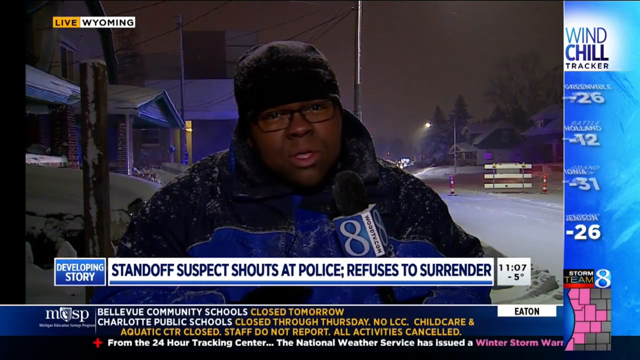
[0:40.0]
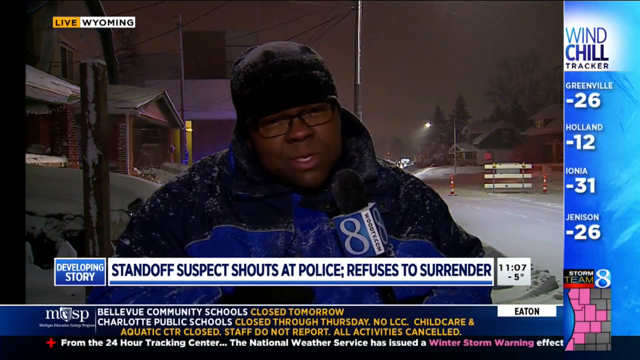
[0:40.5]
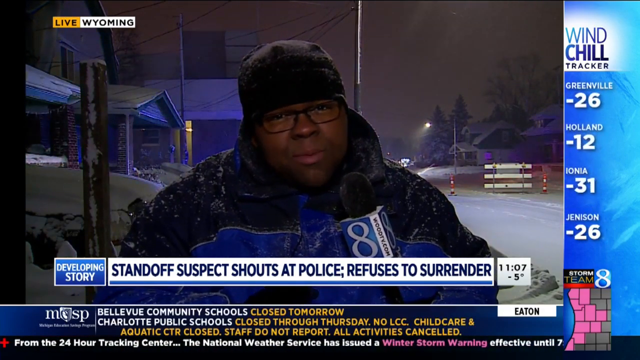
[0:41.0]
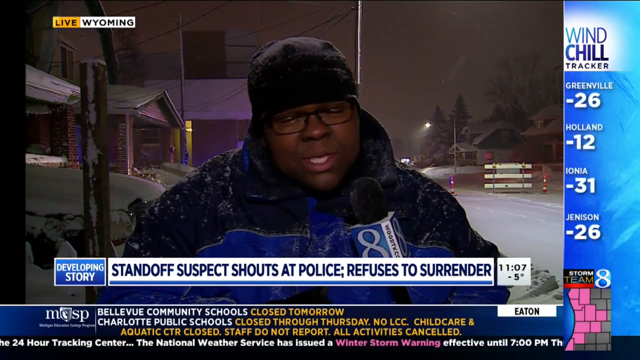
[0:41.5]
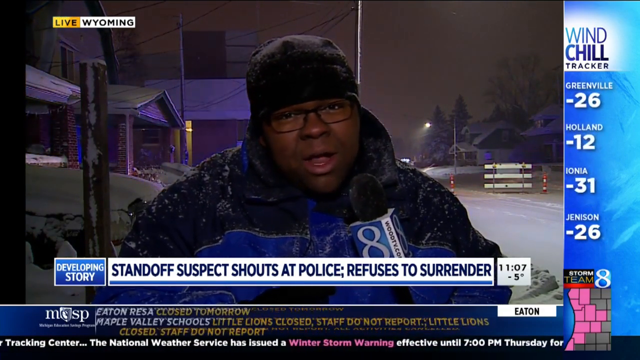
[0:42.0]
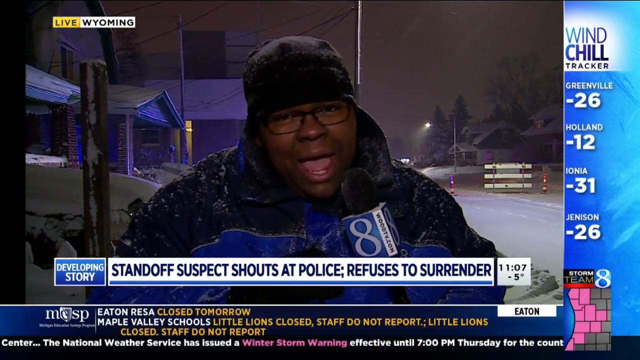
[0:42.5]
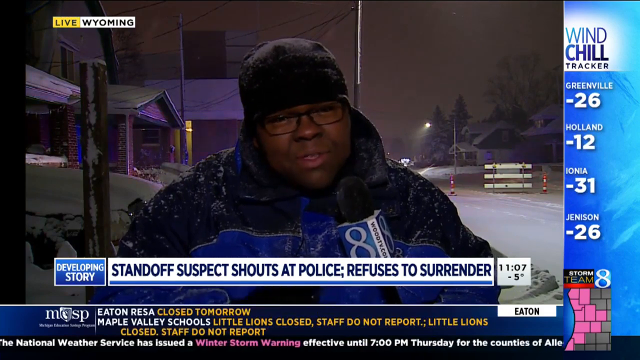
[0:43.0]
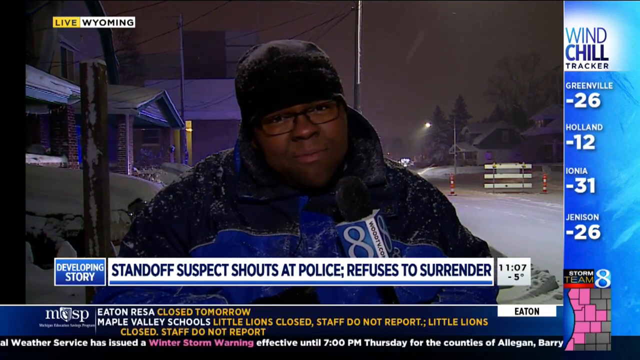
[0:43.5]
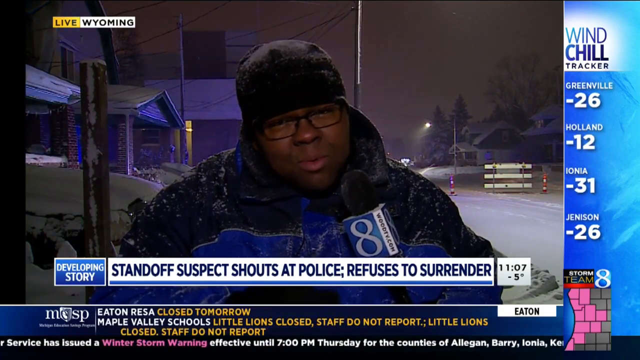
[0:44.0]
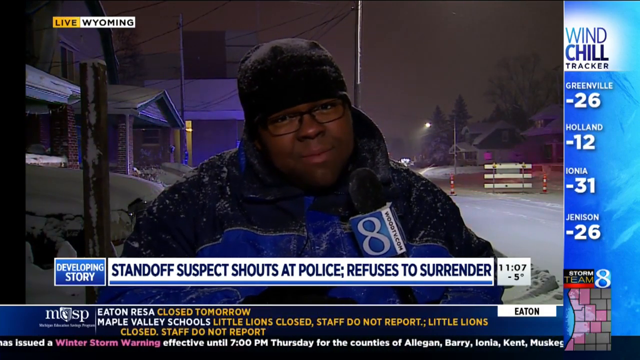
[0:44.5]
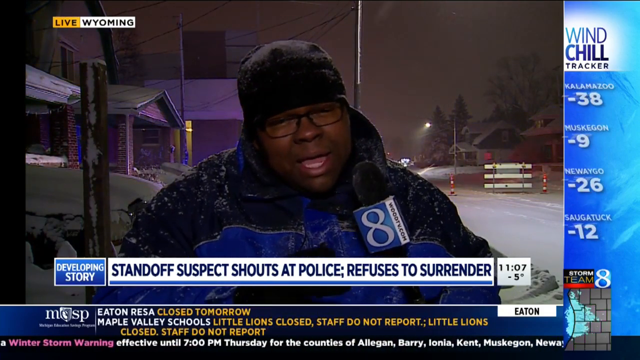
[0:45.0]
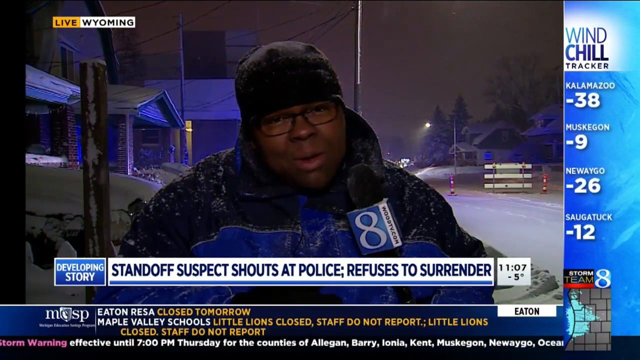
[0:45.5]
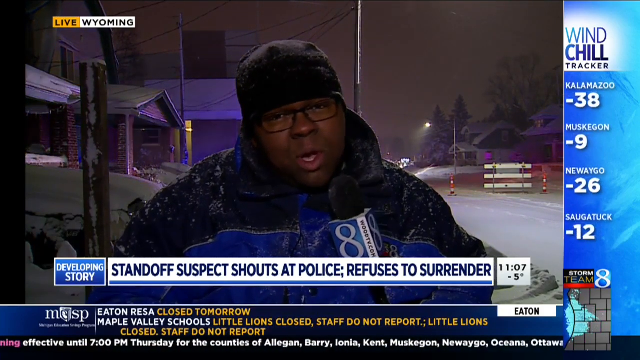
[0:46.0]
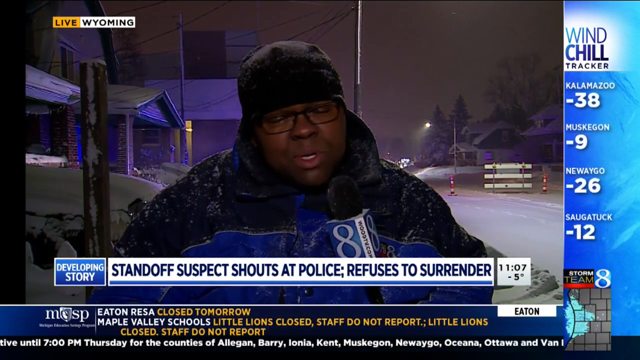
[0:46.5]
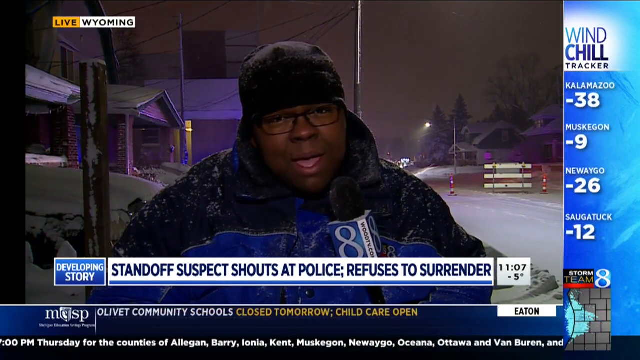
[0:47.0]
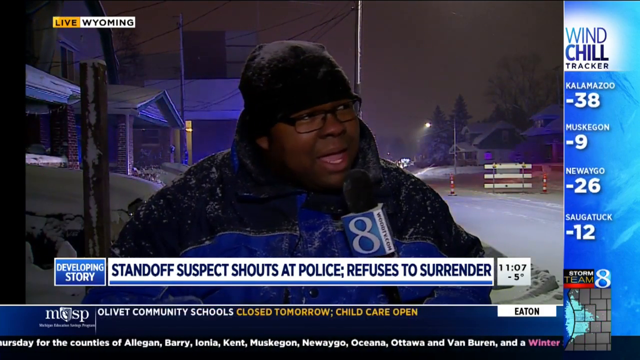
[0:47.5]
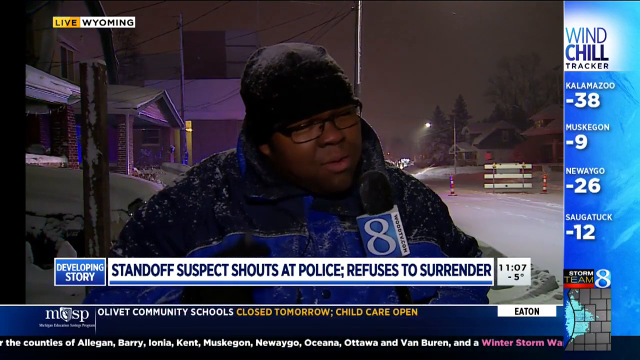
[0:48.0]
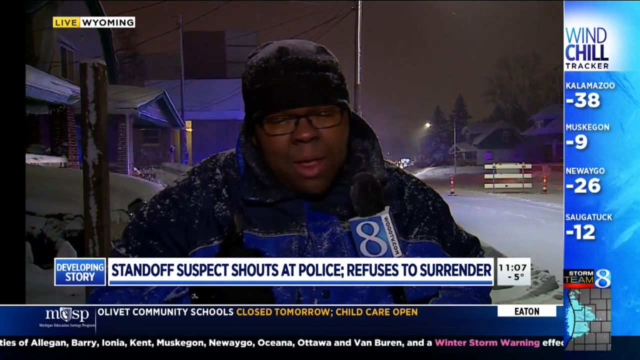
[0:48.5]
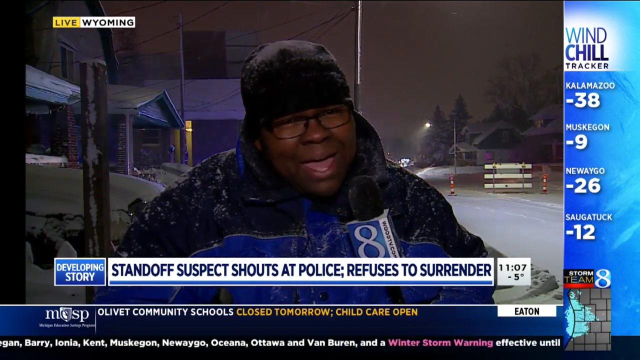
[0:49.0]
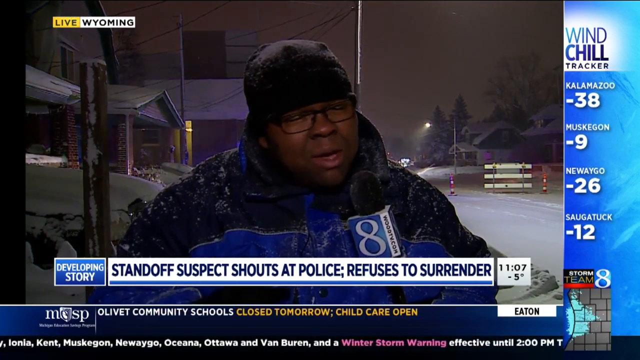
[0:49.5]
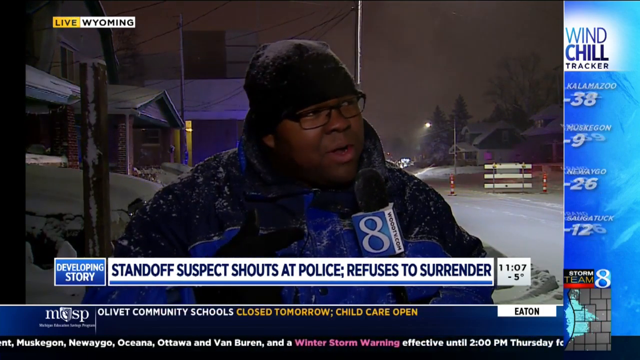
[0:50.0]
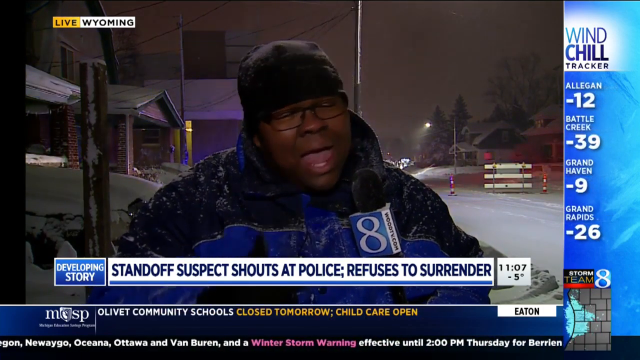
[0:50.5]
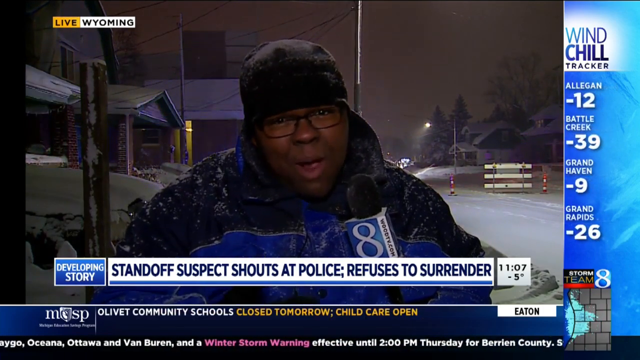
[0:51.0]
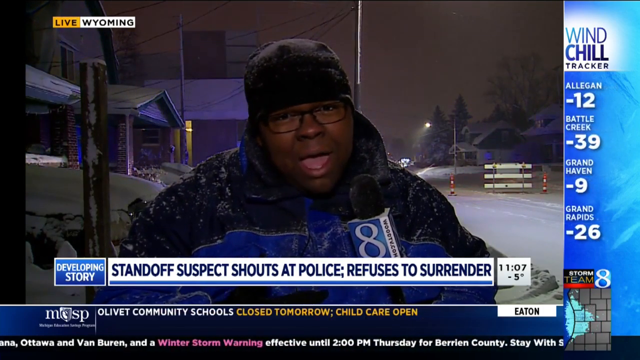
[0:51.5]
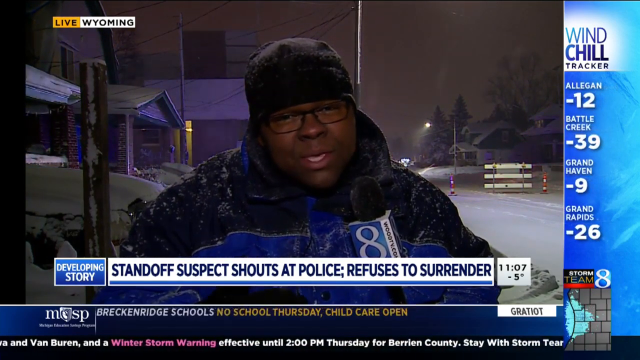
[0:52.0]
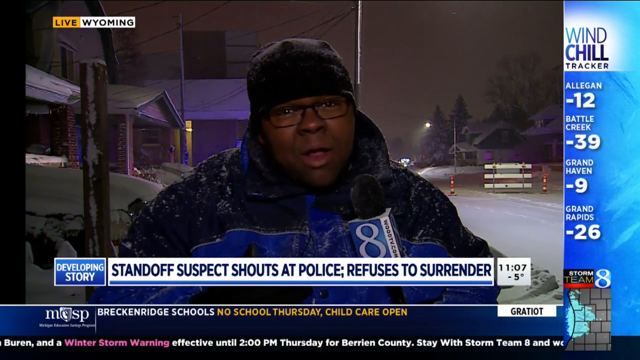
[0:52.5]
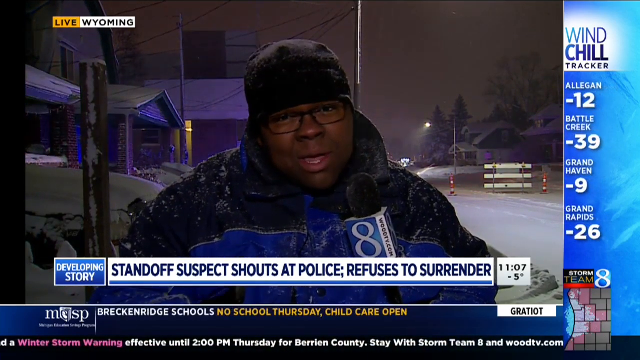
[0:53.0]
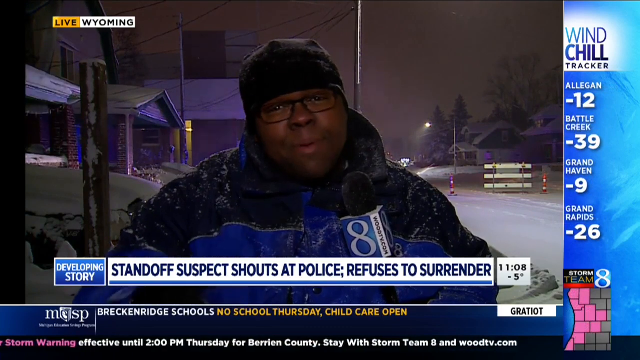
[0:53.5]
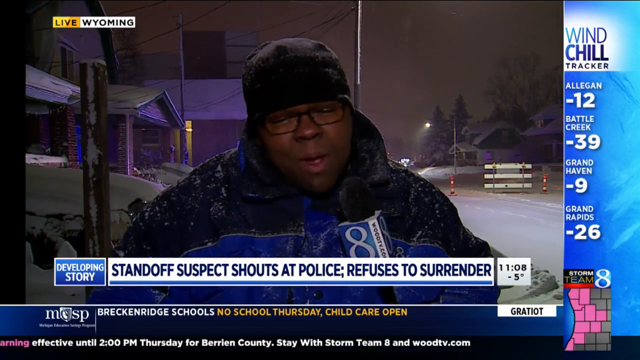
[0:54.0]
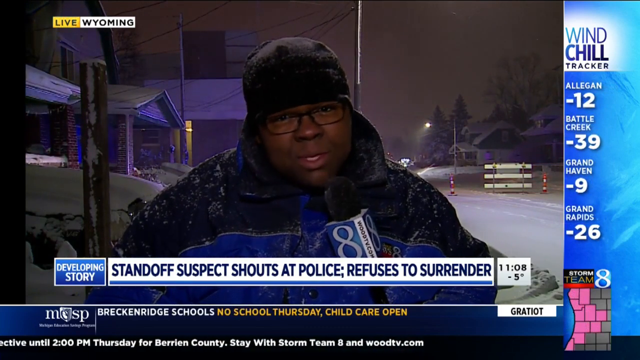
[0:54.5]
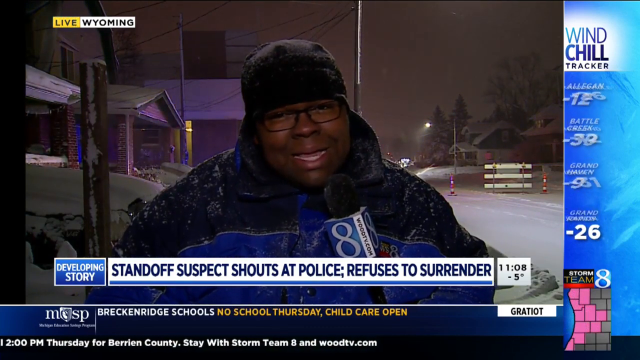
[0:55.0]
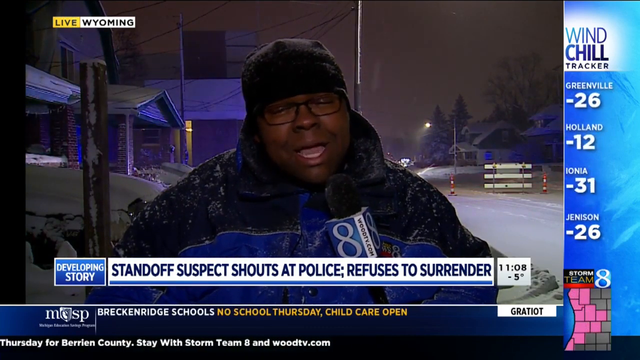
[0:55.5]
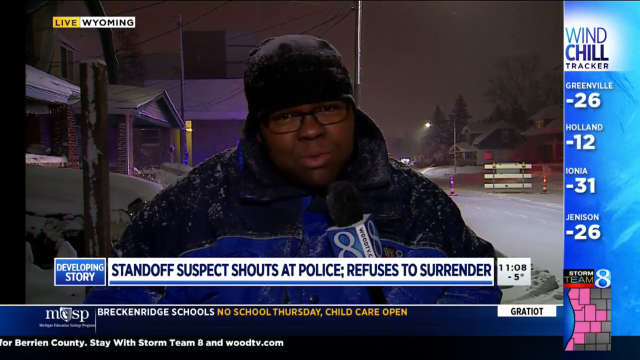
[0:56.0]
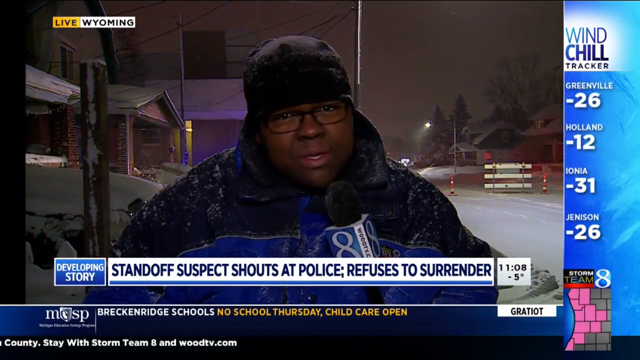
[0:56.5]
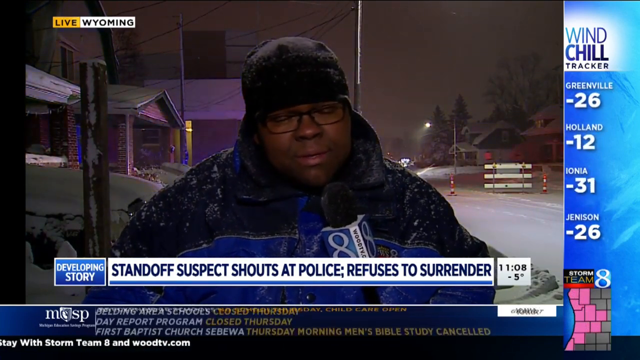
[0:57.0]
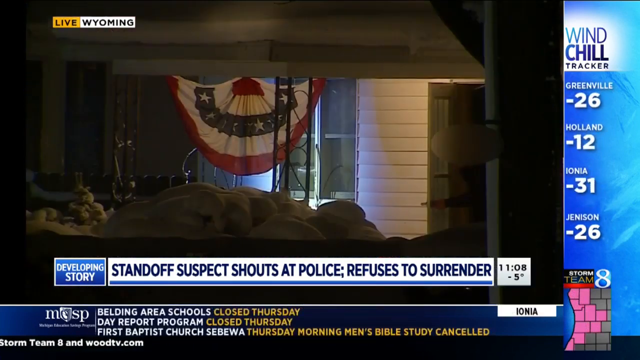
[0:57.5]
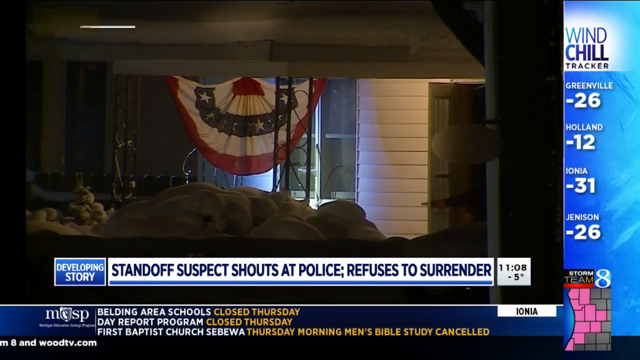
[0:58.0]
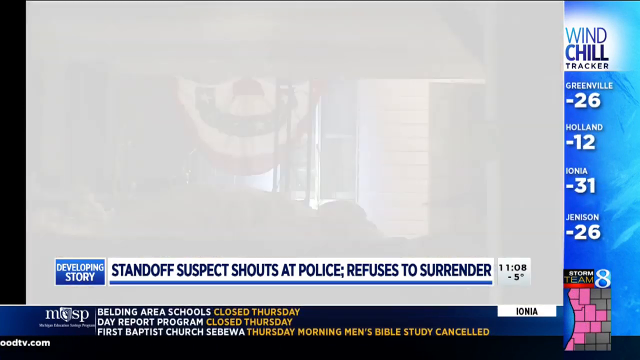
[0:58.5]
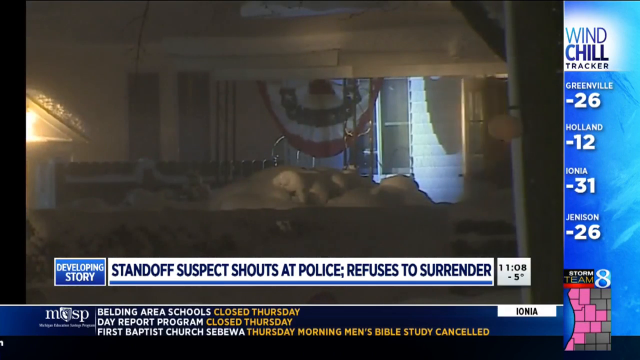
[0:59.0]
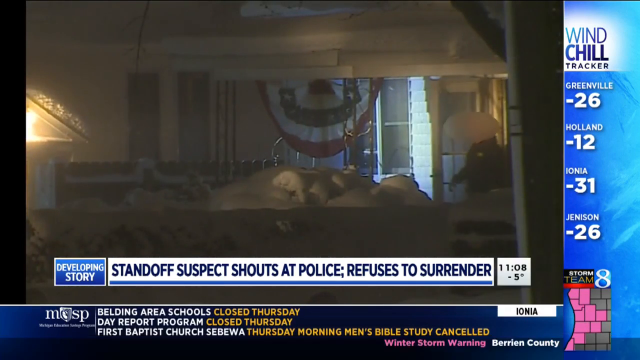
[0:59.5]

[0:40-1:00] The correspondent is still on screen. The bottom of the screen shows updates about schools closing, seemingly separated by district, and a news crawl about the winter storm warning, how it affects different counties around the state and how to stay alert. The wind chill tracker on the right now shows Greenville at minus 26, Holland at minus 12, Johnia at minus 31 and Jemison at minus 26. The time reads 11:08 with five degrees below zero outside. The video then seems to move inside the house, apparently for the story about the standoff. The footage, shown very briefly and a little blurry, looks like the inside of the house: the front door is open, a red, white and blue flag hangs up, apparently a version of the Confederate flag, and curtains and some other structure are visible. A second brief shot gives a slightly better view.